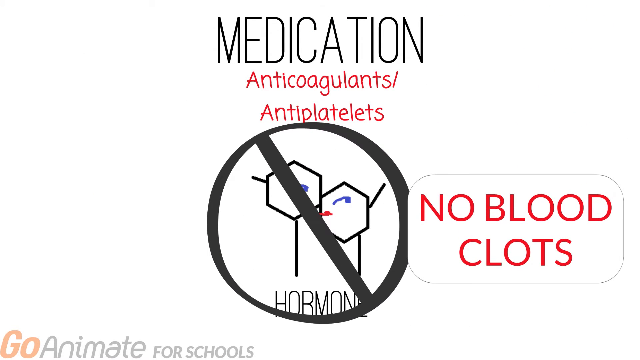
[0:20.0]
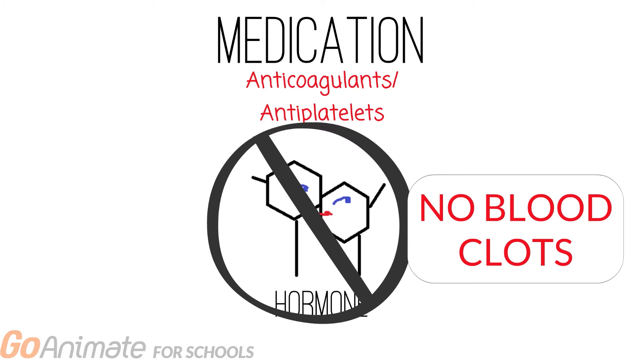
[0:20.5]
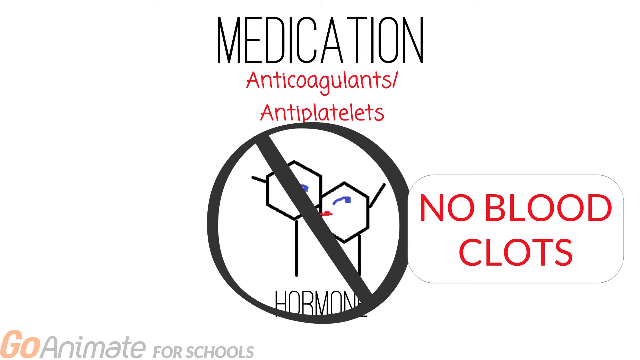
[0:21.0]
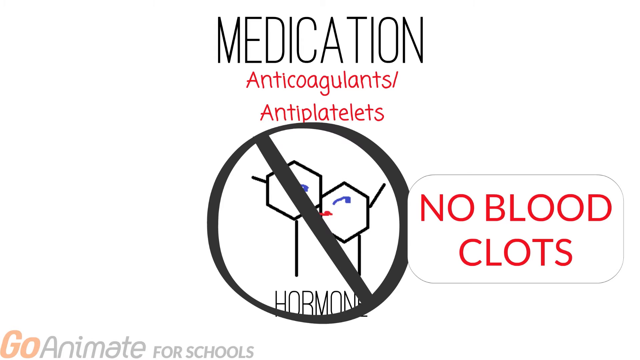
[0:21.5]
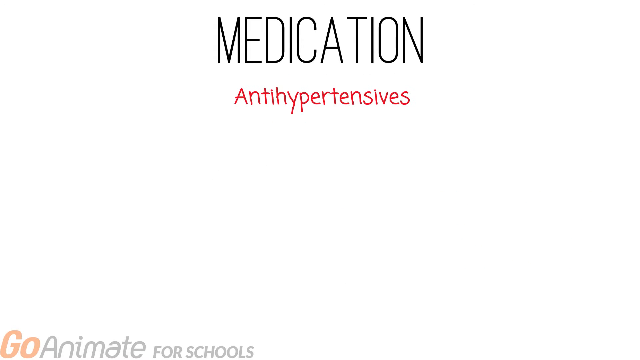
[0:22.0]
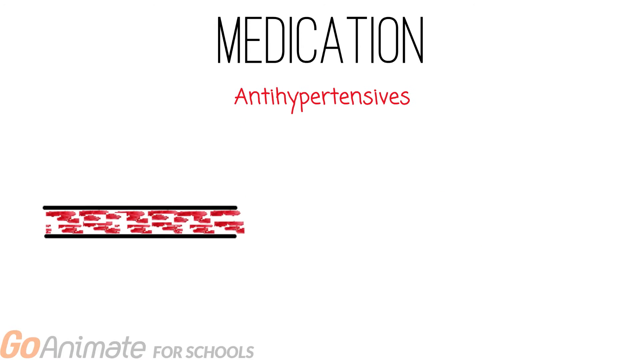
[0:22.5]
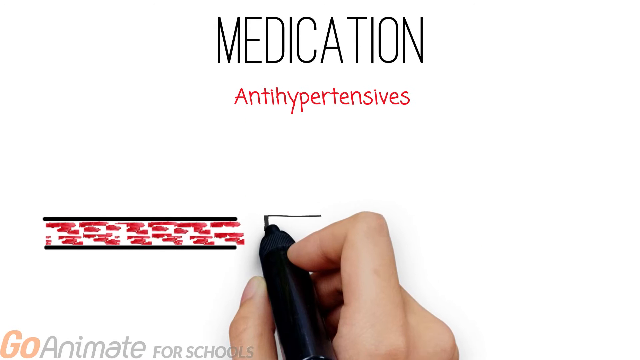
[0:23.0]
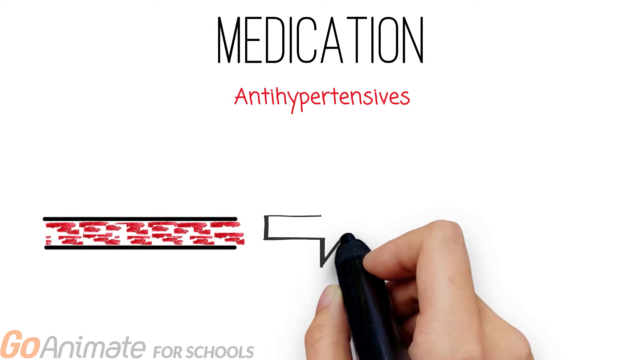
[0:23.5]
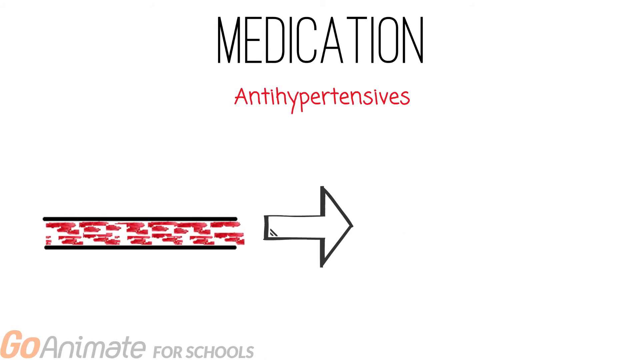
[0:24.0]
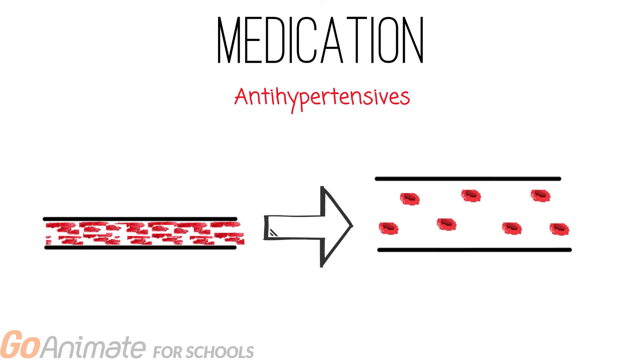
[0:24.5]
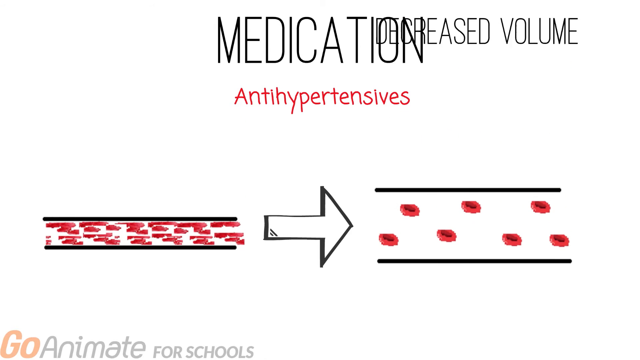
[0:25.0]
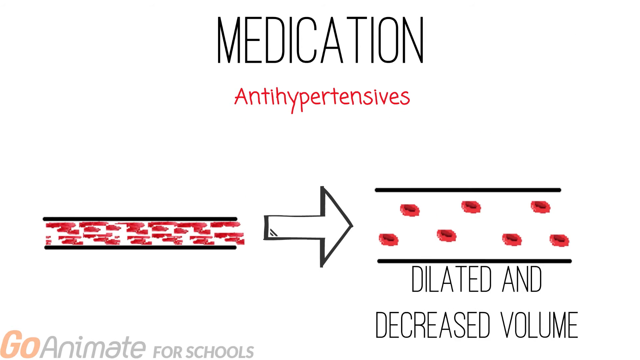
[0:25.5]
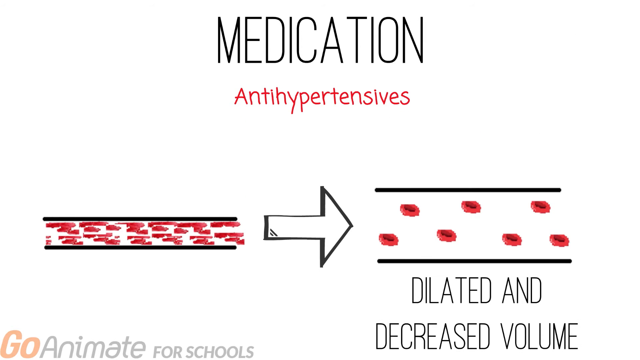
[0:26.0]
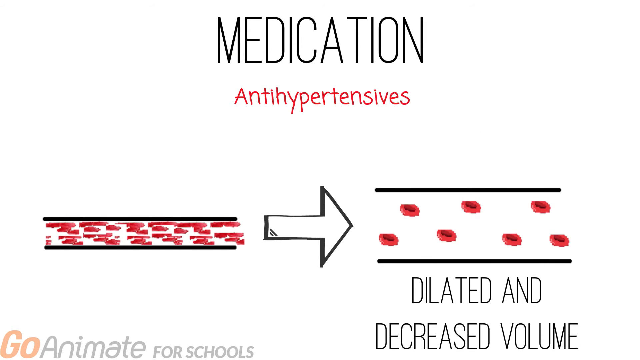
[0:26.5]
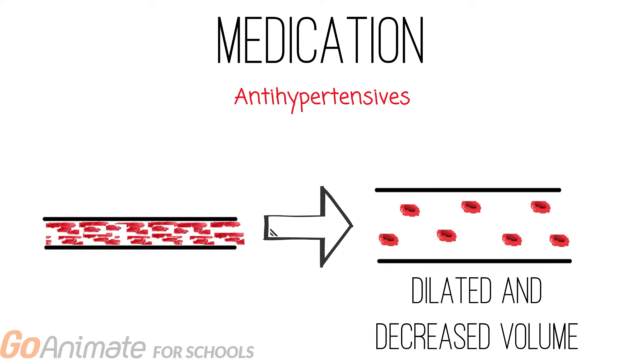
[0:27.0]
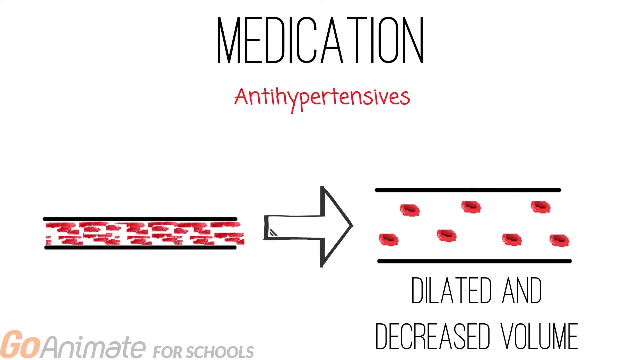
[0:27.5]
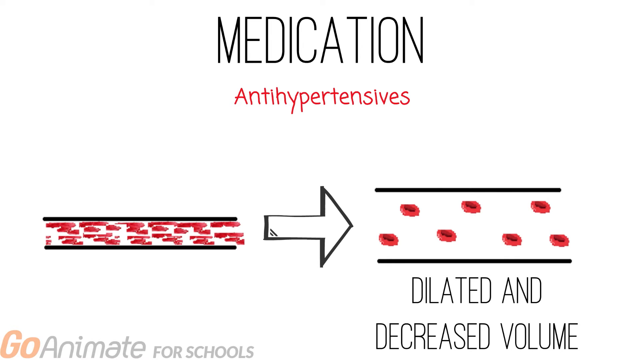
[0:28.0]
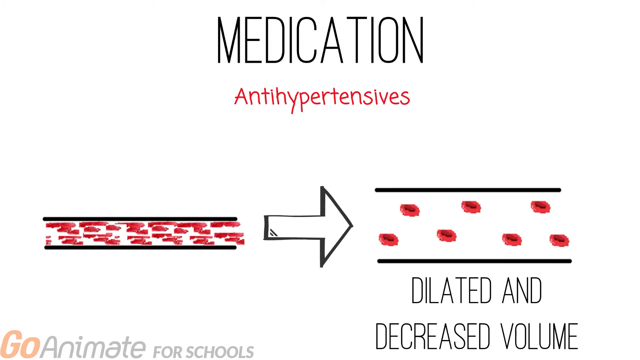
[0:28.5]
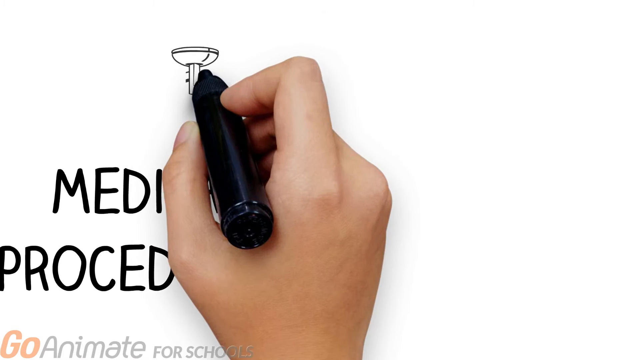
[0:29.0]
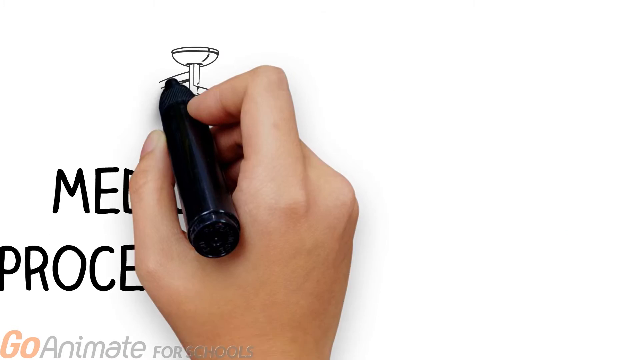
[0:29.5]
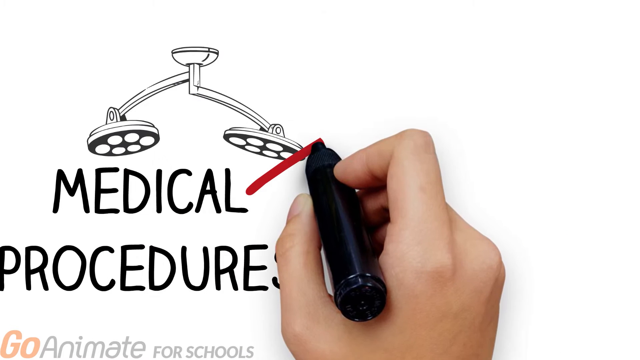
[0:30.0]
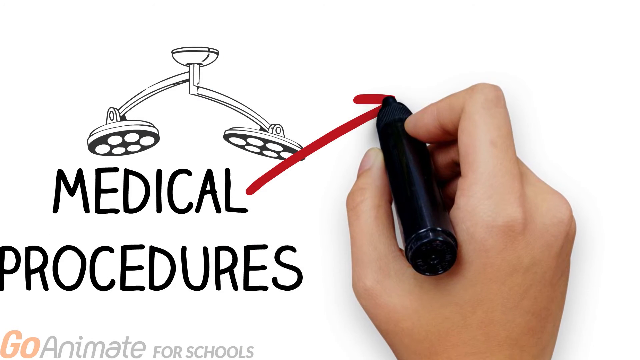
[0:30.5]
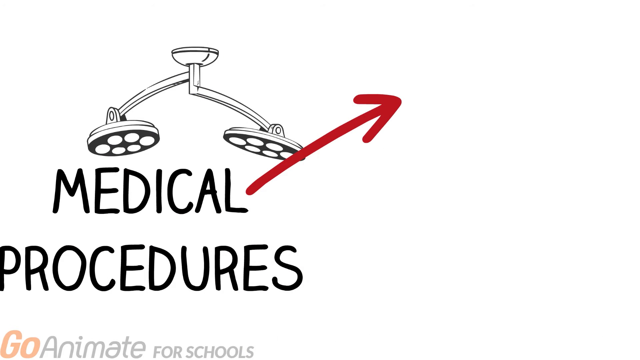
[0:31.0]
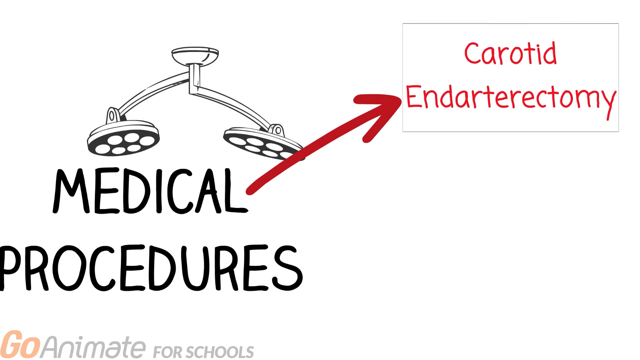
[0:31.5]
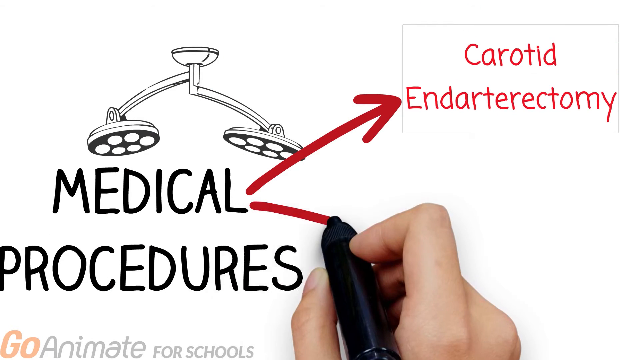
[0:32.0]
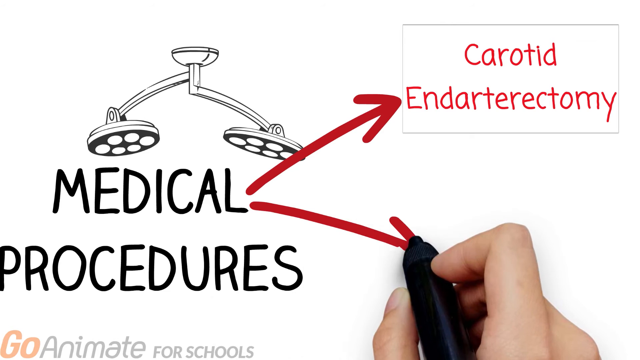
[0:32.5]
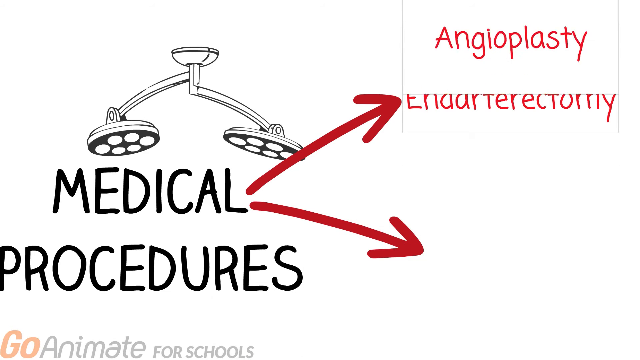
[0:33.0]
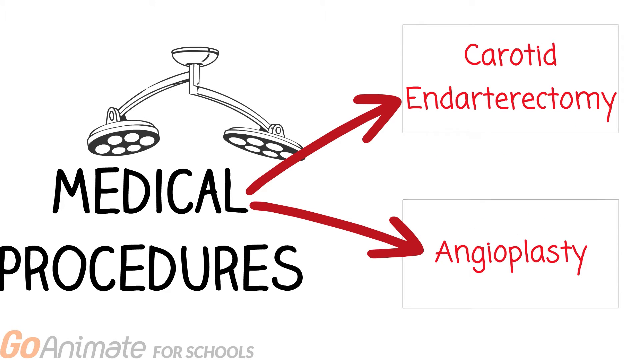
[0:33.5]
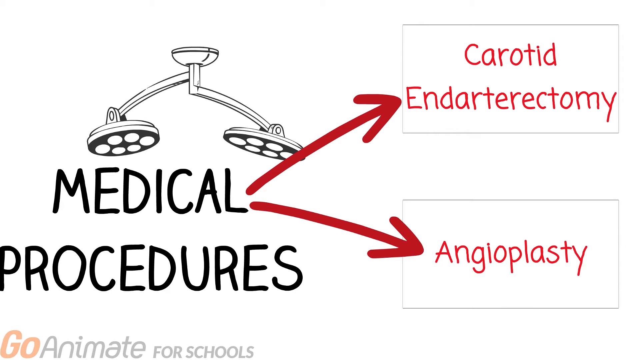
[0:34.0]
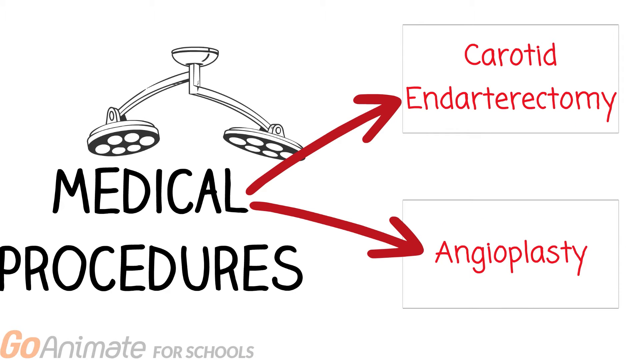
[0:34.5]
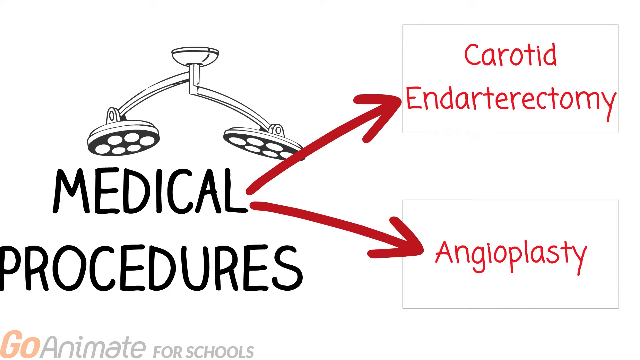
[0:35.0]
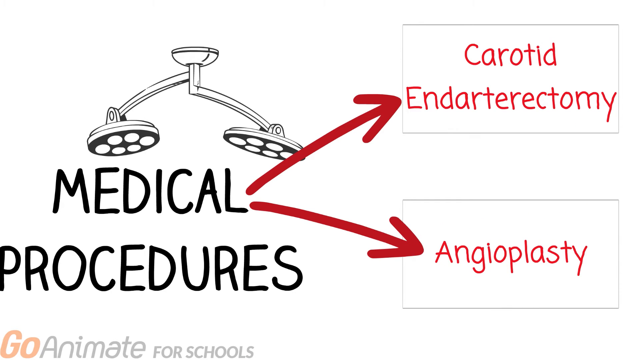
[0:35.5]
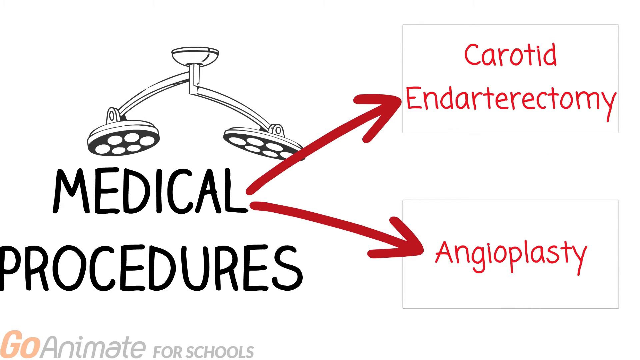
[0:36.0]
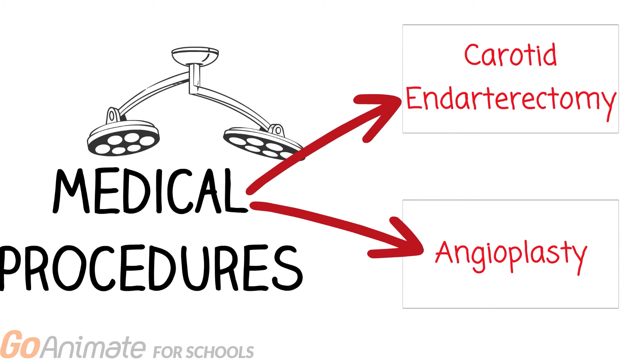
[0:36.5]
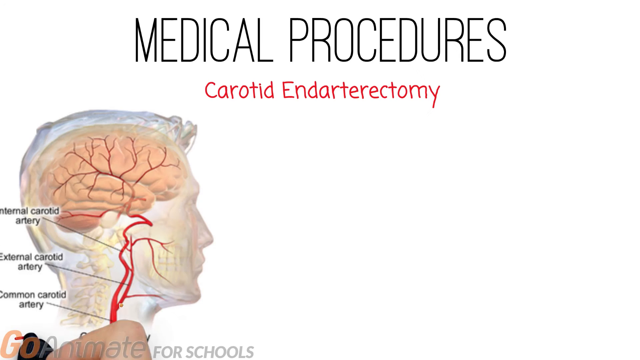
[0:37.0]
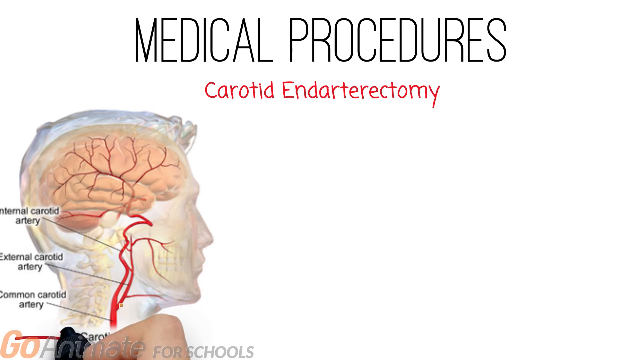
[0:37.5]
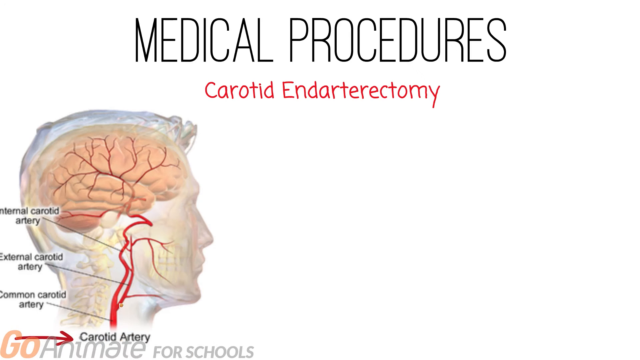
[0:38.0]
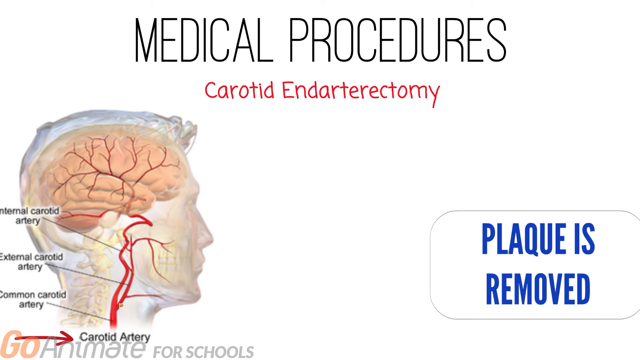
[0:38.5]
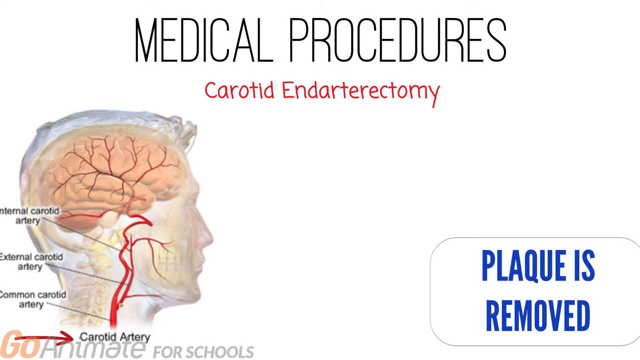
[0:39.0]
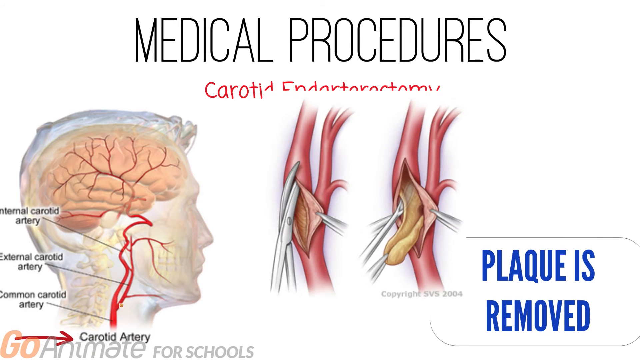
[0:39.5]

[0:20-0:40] Text reads "medication anticoagulants / antiplatelets," with "anticoagulants" and "antiplatelets" in red. Beneath it, two cartoon characters with octagonal-shaped faces with eyes are kissing, with a black circle and a slash through it over them. "no blood clots" is in red in the bottom right corner, and beneath the cartoon characters it says "hormone." The next screen shows "medication" at the top and "antihypertensives." In the bottom left corner, red blood flows through two black lines, apparently meant to show blood flowing. On the right are two black lines labeled "dilated and decreased volume," and between the two depictions an arrow points toward "dilated and decreased volume." The human hand comes back with a black marker. In the top left corner are two hanging fixtures that look like either lights or showerheads, one on the right and one on the left, with "medical procedures" underneath and a red arrow pointing to the top left part of the screen, which says "carotid endarterectomy." The hand then draws a red arrow pointing to the bottom right corner of the screen, which says "angioplasty." The screen moves on to show "medical procedures" in black text at the top center, with "carotid endarterectomy" in red underneath. In the bottom left corner is the head of a man showing his brain, with "internal carotid artery" behind his brain and "external carotid artery" extending down behind the man's ear and into his neck. There are anatomical diagrams of the veins and arteries, both arteries, and the bottom right says "plaque is removed" in blue text.